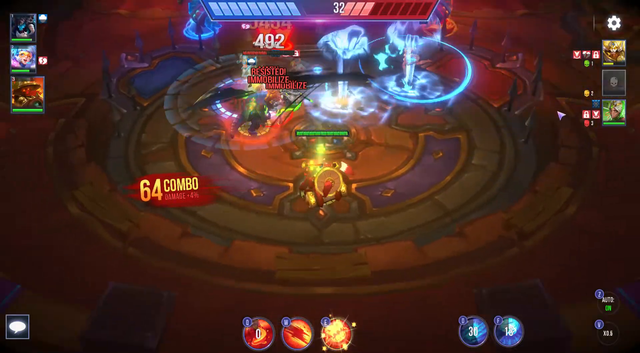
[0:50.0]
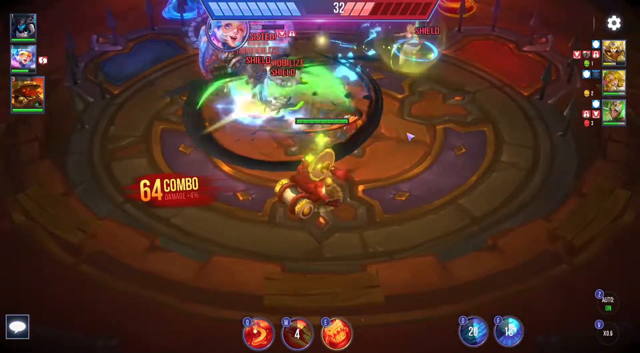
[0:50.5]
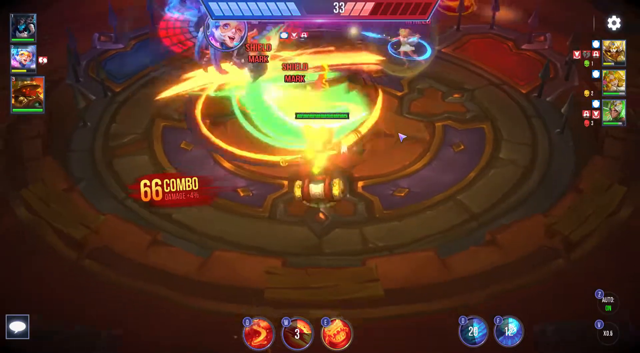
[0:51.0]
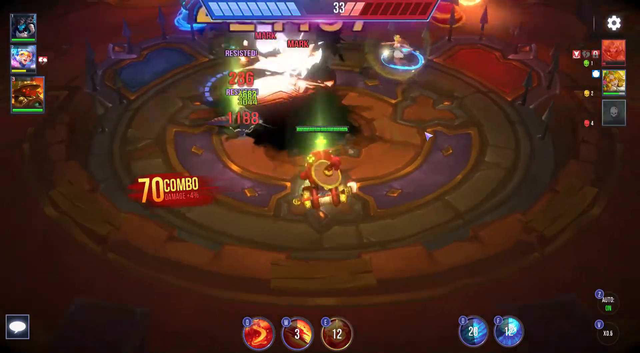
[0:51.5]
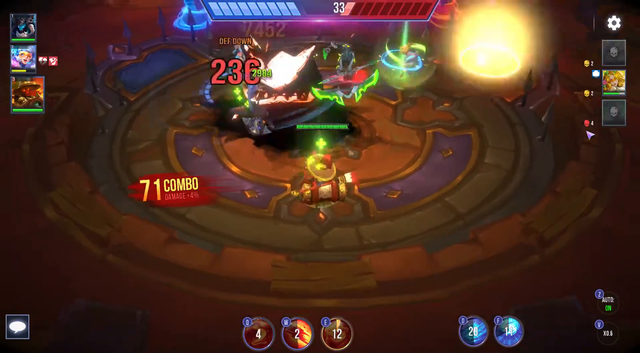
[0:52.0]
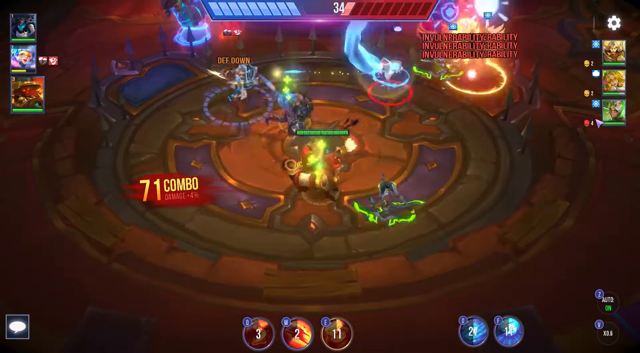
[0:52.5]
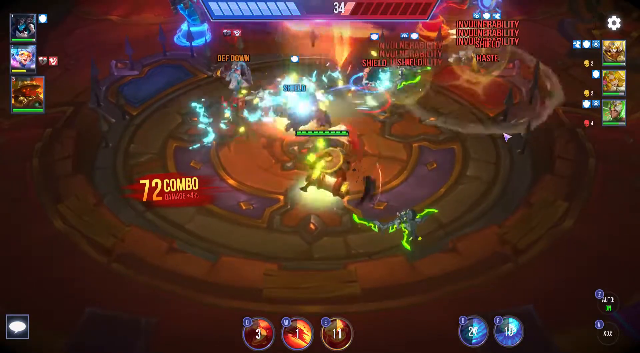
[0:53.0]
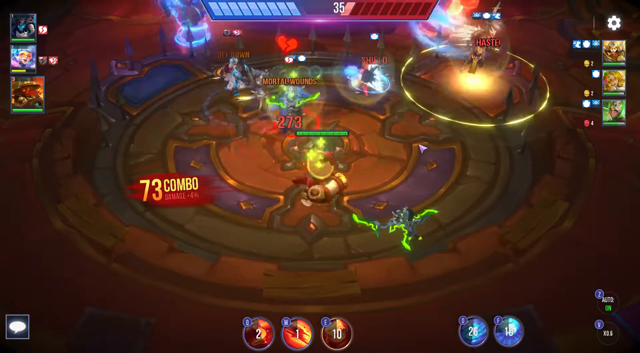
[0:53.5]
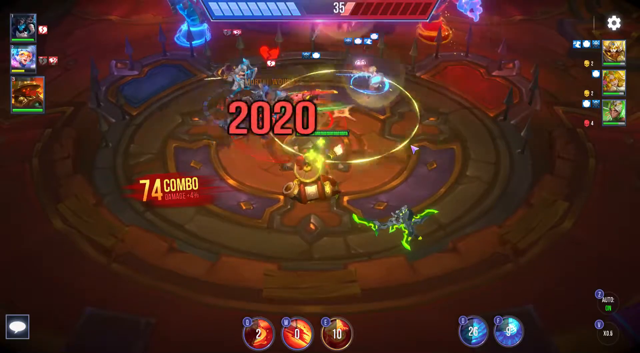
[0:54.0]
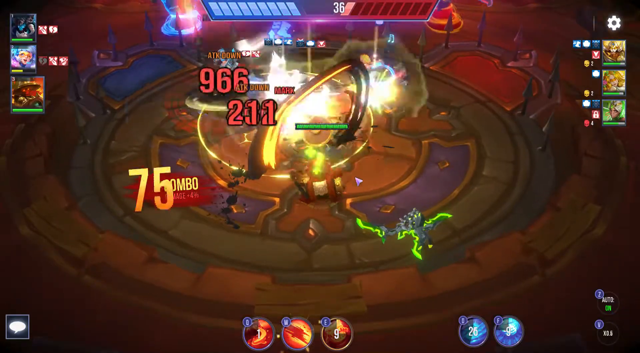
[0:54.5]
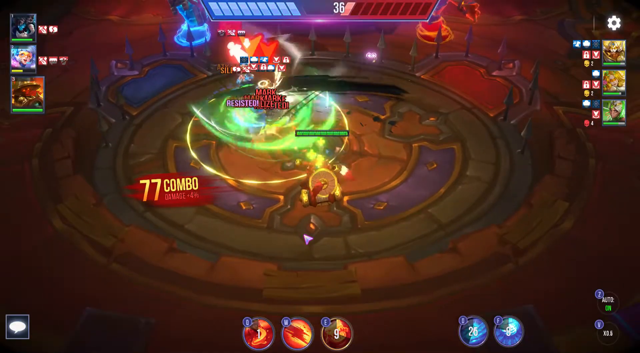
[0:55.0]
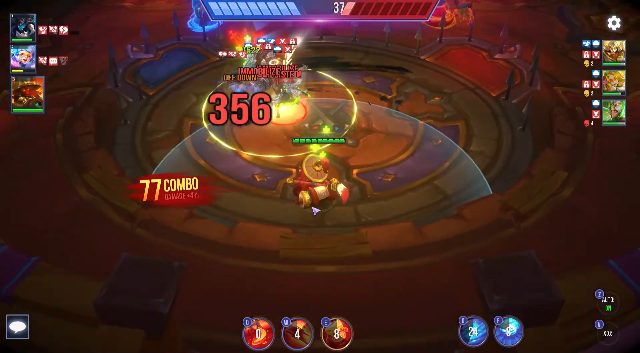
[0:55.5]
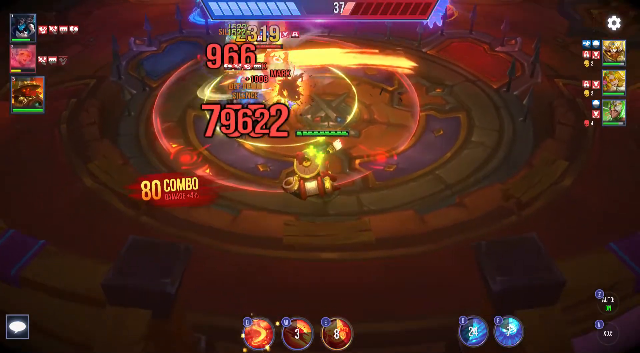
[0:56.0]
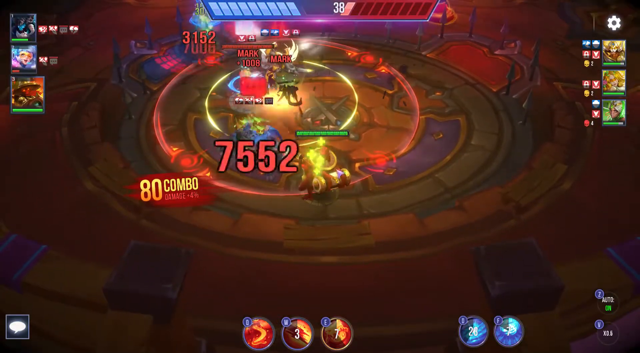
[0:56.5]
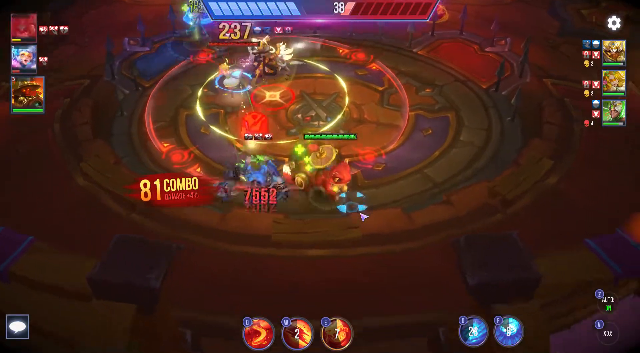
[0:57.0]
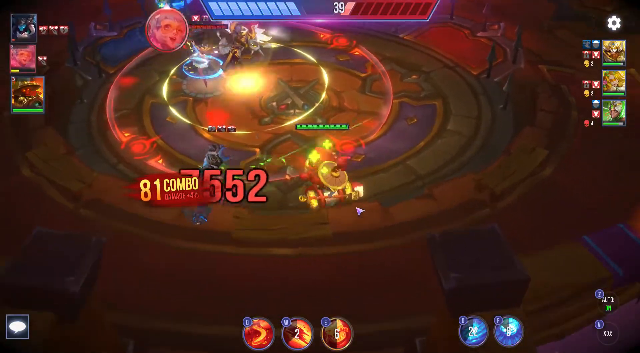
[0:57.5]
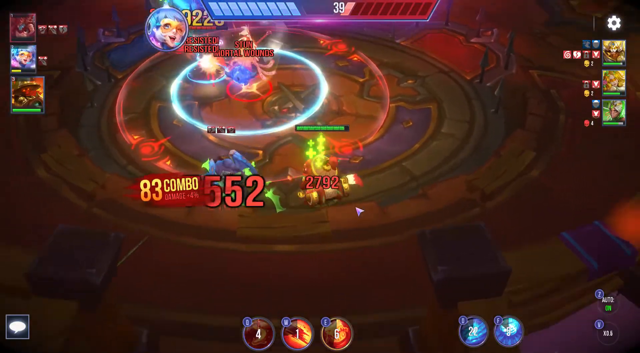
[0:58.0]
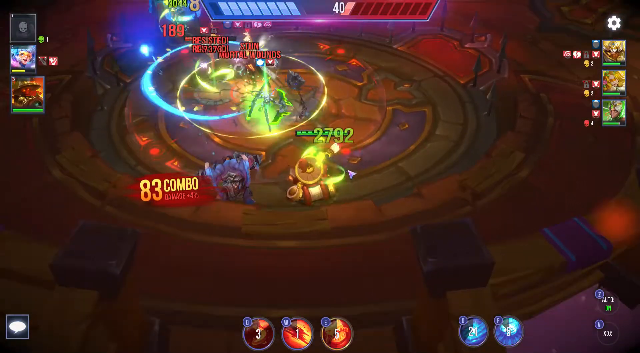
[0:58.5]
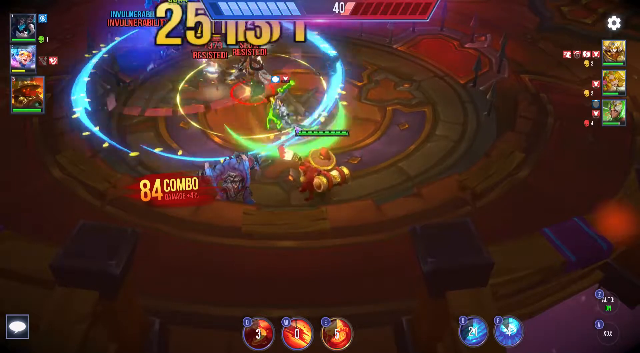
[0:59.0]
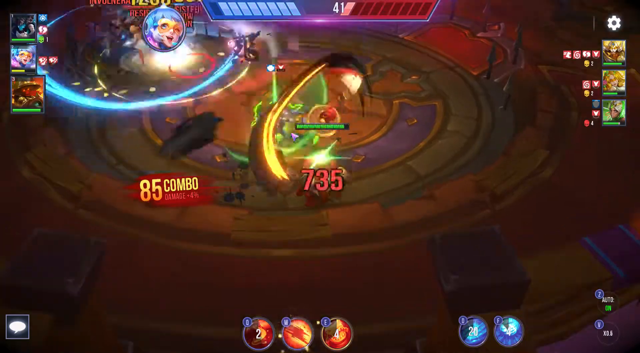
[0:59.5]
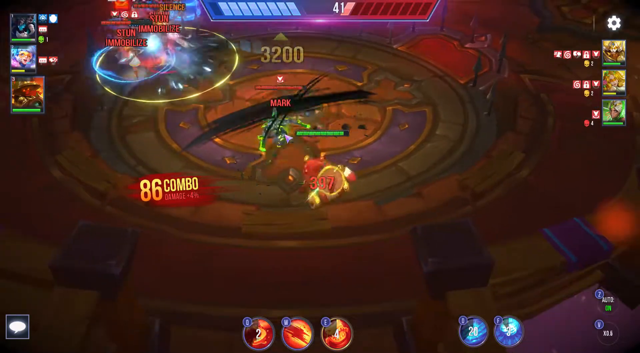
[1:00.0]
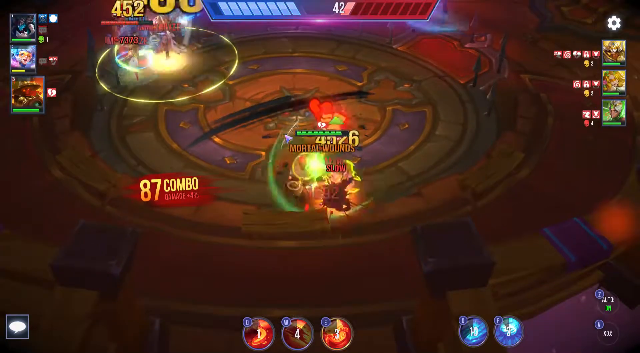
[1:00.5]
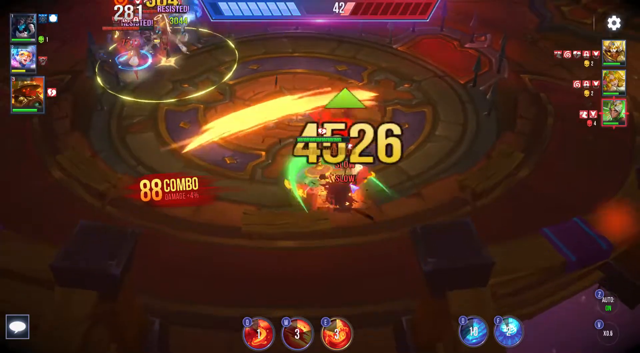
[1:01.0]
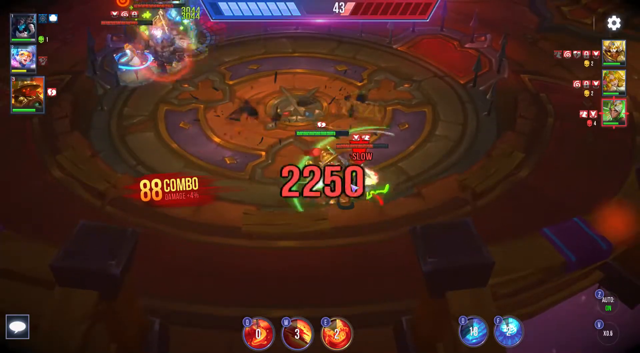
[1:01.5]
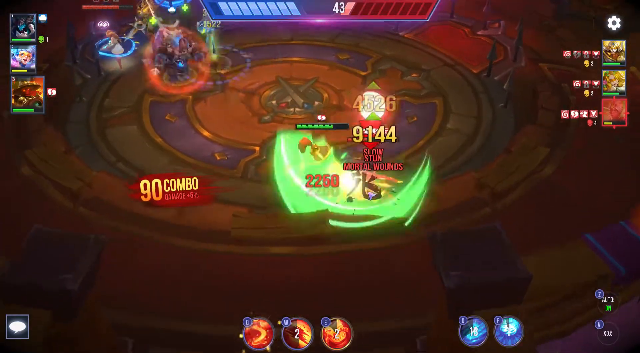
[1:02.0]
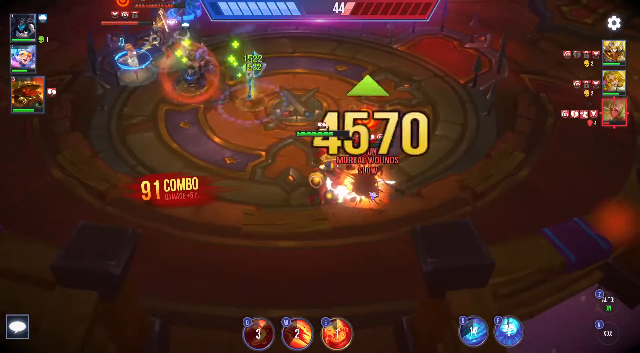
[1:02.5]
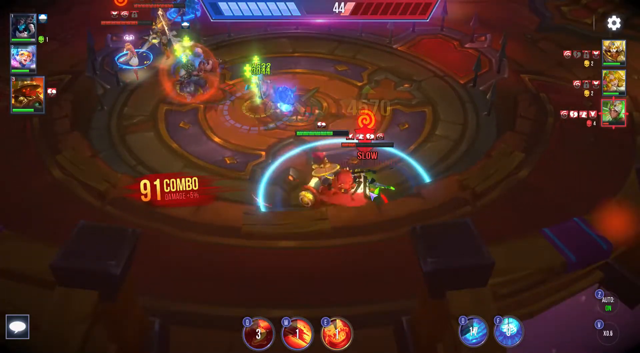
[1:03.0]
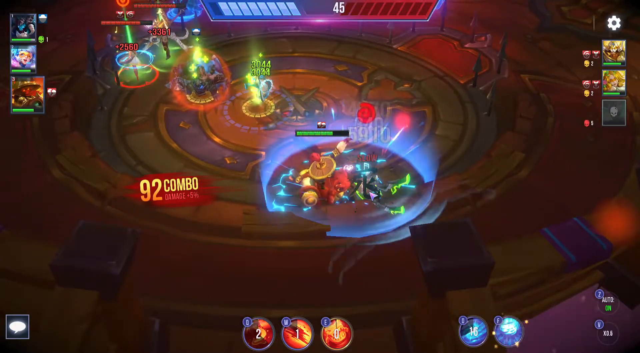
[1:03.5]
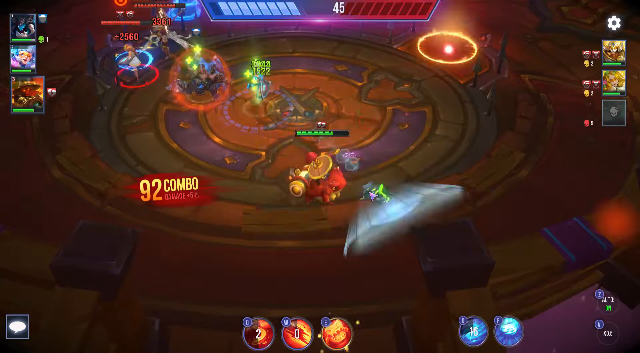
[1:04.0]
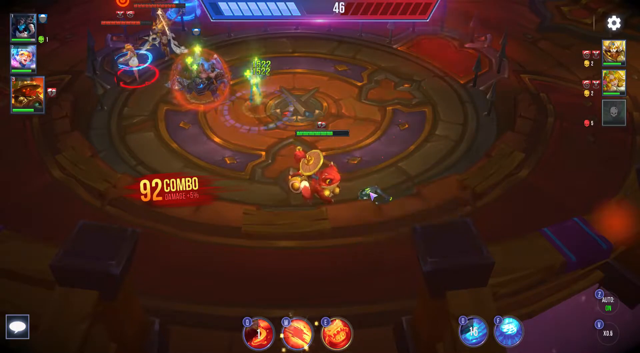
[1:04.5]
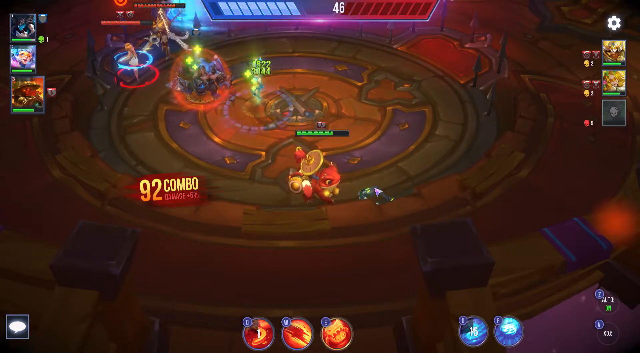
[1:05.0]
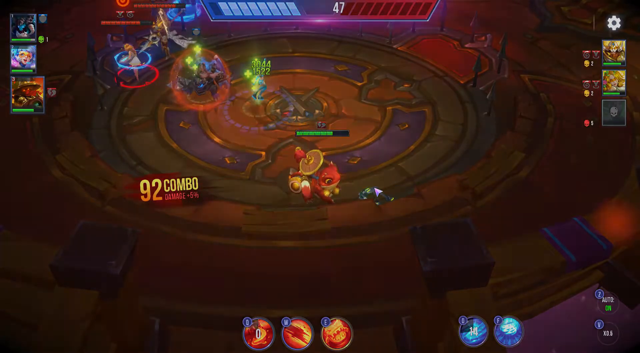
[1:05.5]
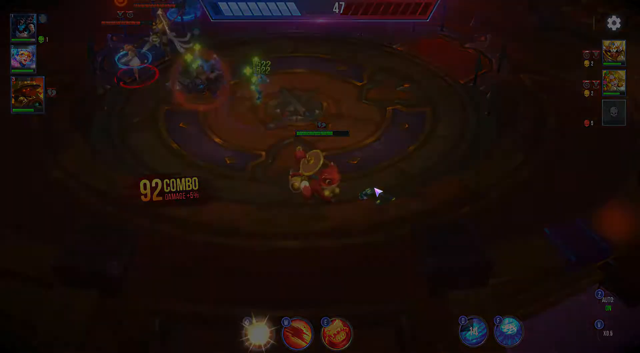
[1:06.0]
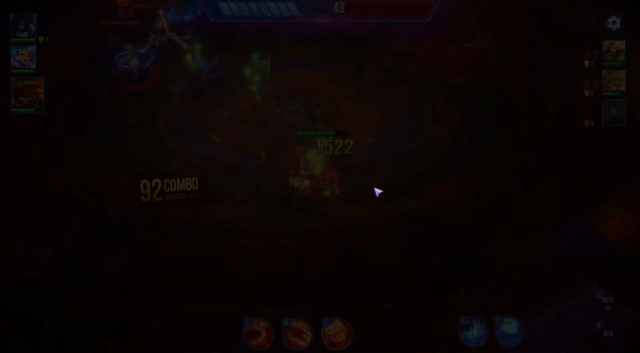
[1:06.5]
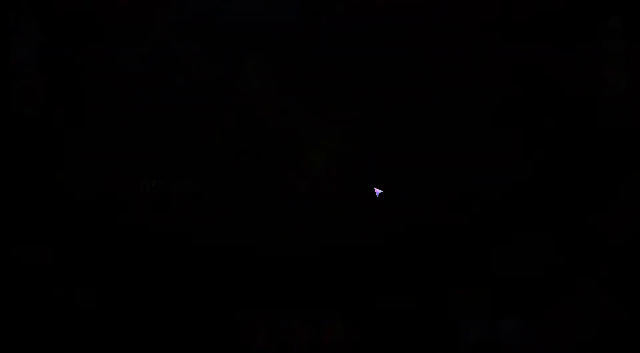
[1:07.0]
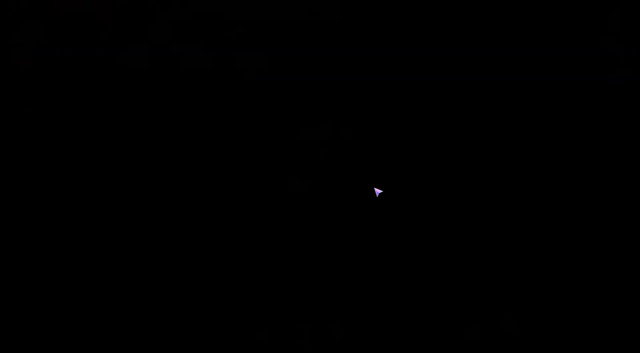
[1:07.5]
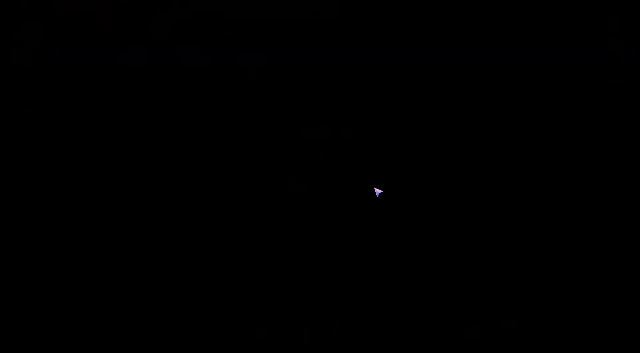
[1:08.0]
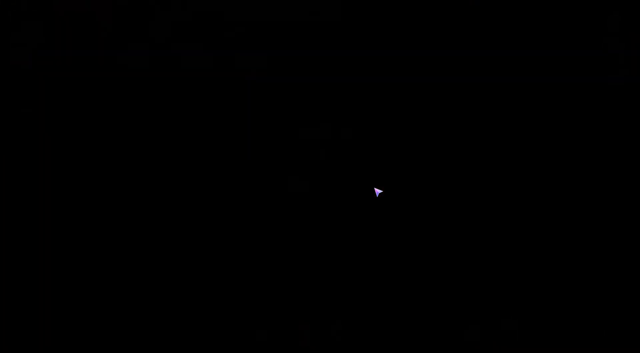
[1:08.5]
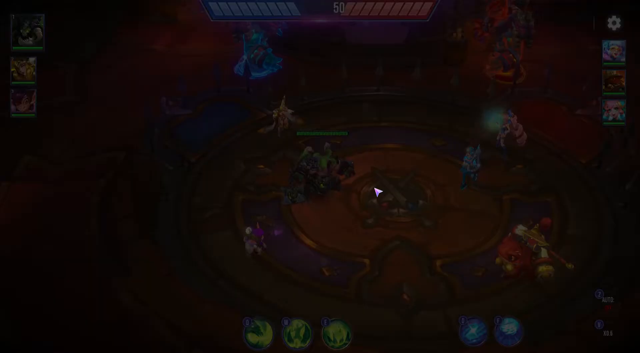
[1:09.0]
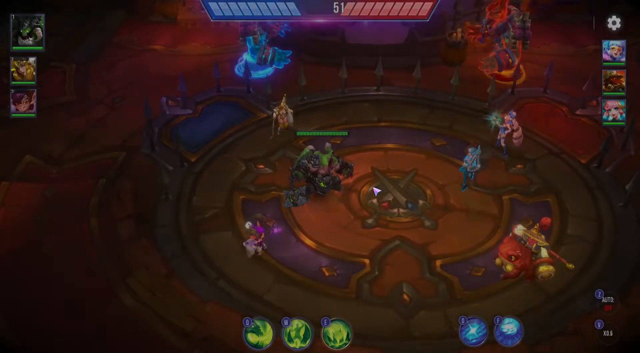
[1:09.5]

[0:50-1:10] Someone appears to be streaming a 3D video game, apparently a fighting game. The ground is red, and there is a circle that looks like it is probably the player's circle or a battle circle. What appear to be two main characters, maybe three, fight each other, and each time they hit each other the damage or scores are overlaid on the game. The characters are very tiny and hard to recognize; they may be a mix of human and animal. Superimposed text starts at "64 combo", and each time this particular player apparently swings whatever tool they are using, the count goes up, ending at "92 combo".